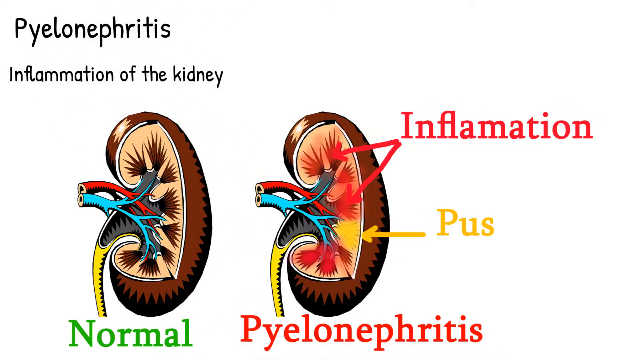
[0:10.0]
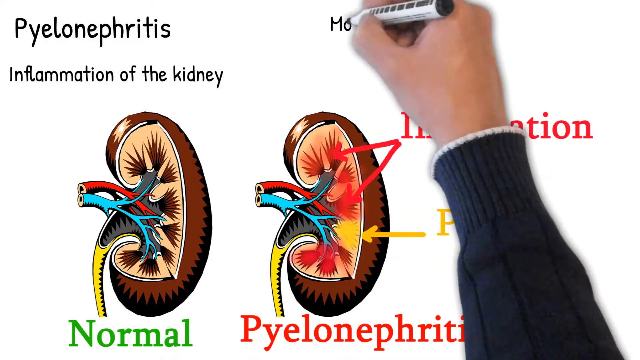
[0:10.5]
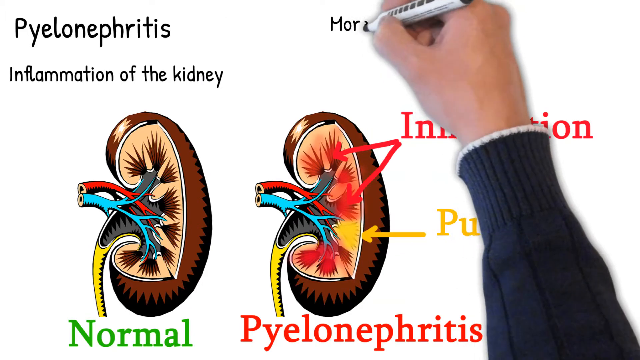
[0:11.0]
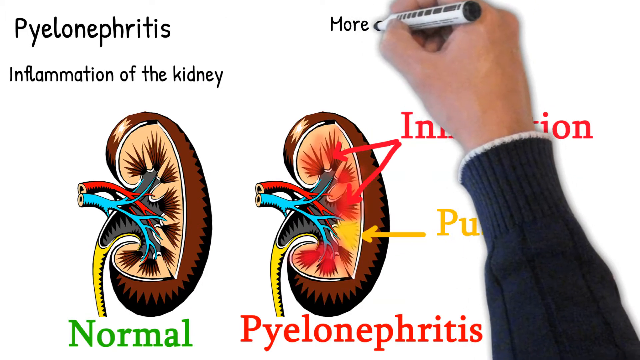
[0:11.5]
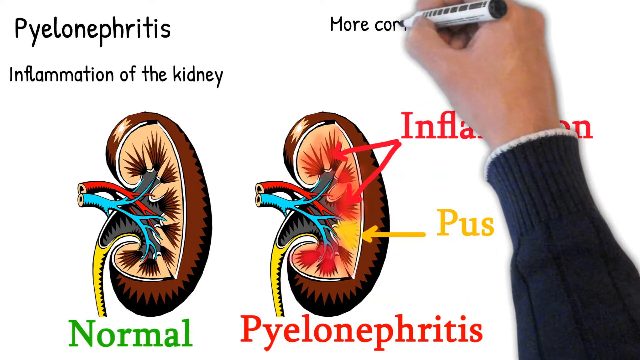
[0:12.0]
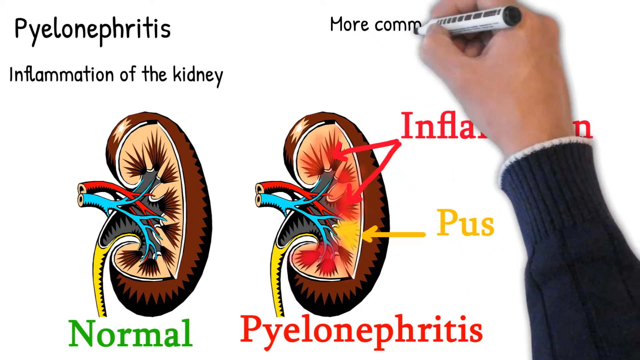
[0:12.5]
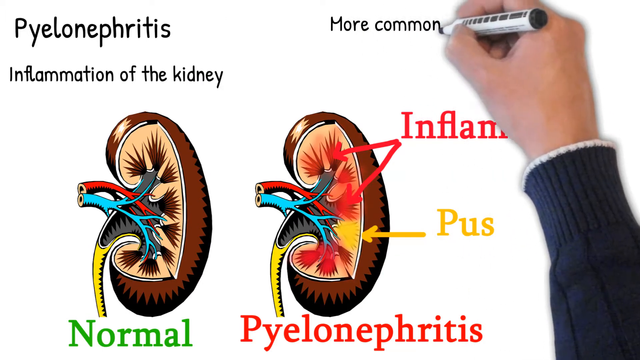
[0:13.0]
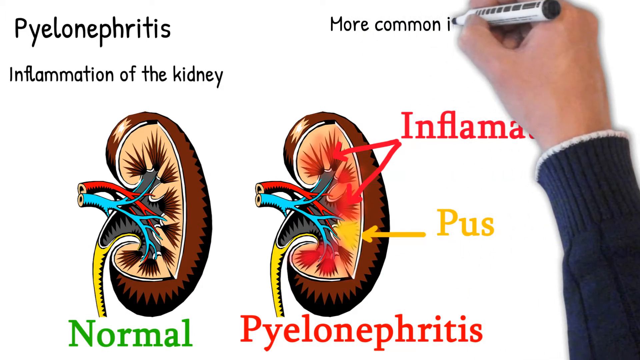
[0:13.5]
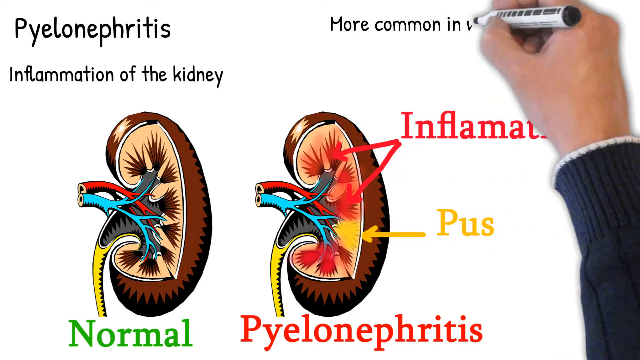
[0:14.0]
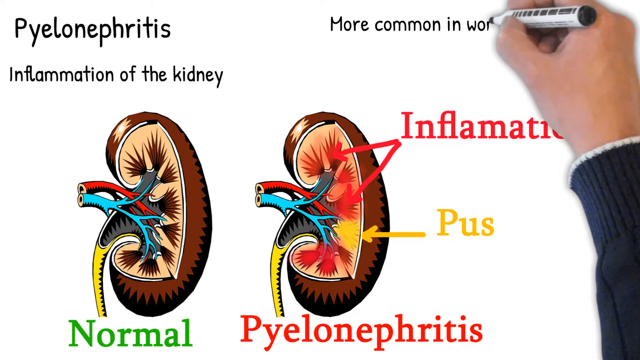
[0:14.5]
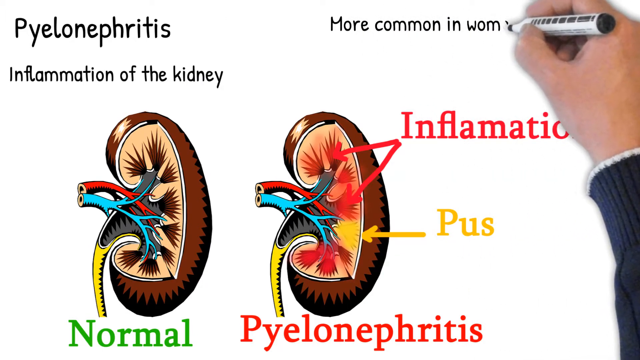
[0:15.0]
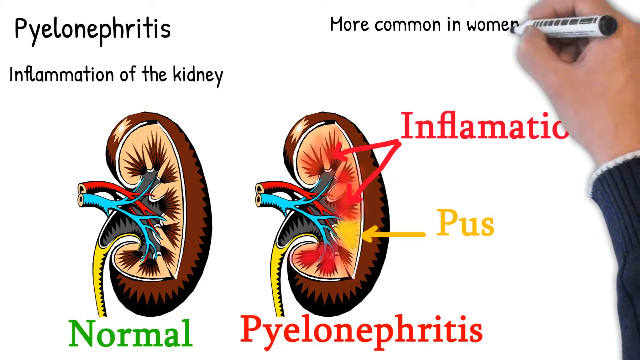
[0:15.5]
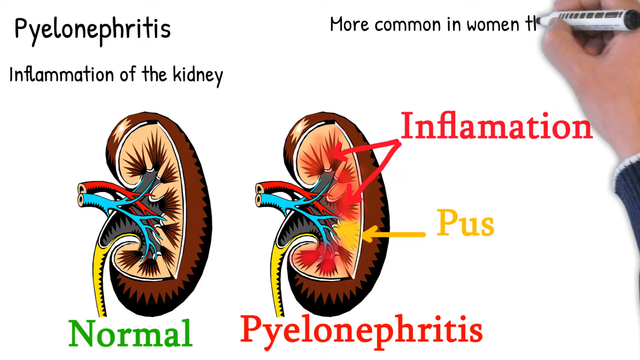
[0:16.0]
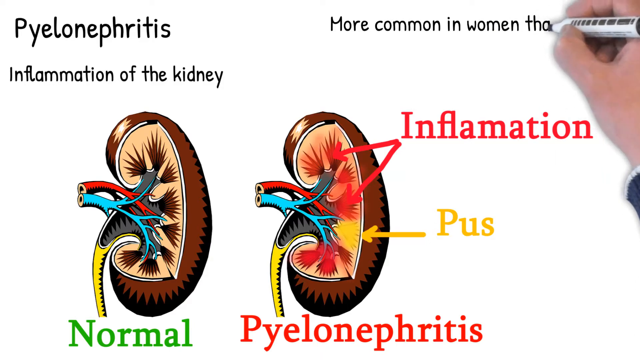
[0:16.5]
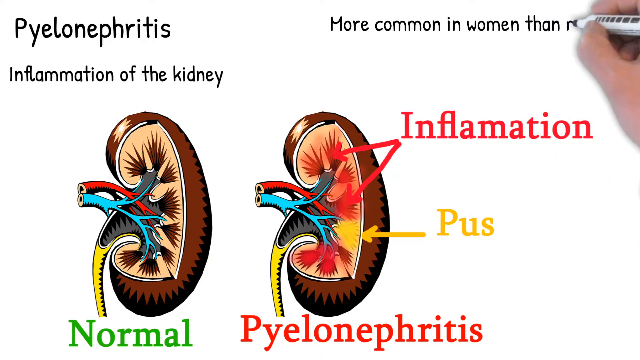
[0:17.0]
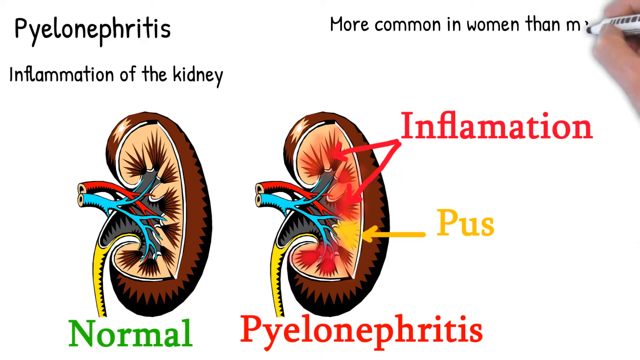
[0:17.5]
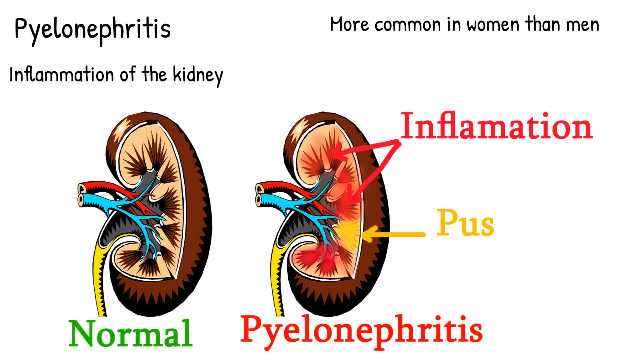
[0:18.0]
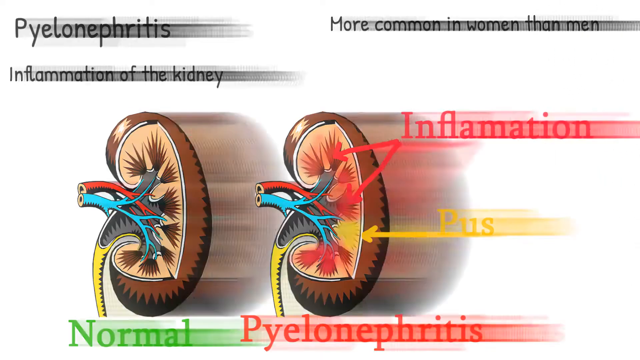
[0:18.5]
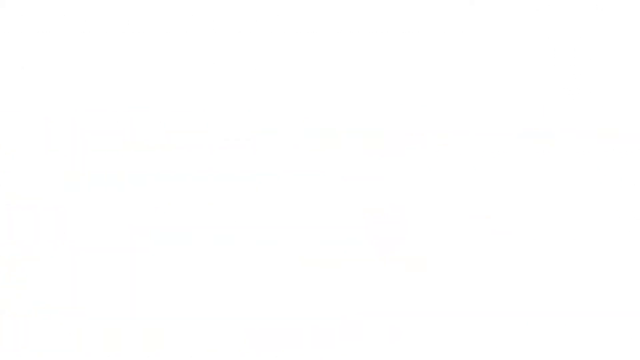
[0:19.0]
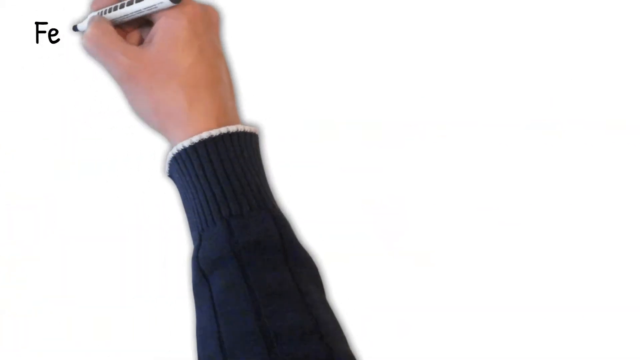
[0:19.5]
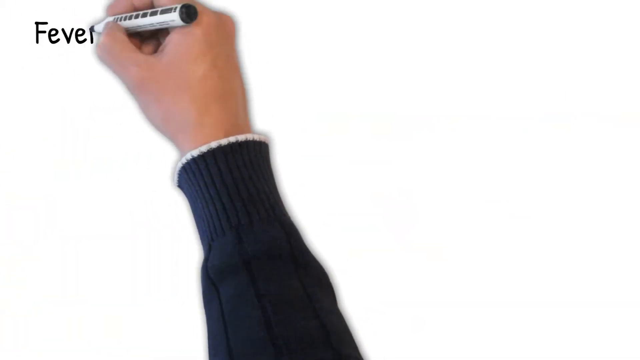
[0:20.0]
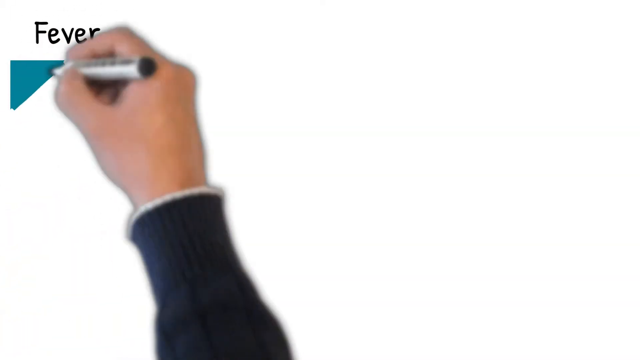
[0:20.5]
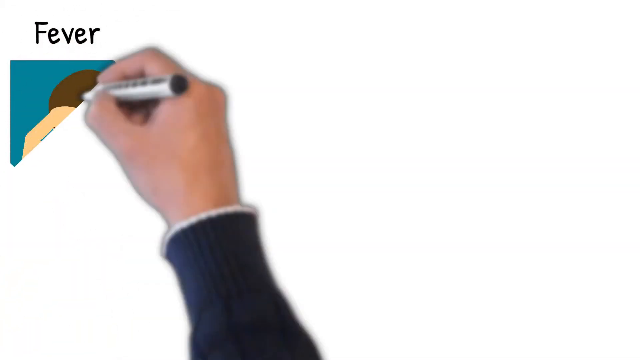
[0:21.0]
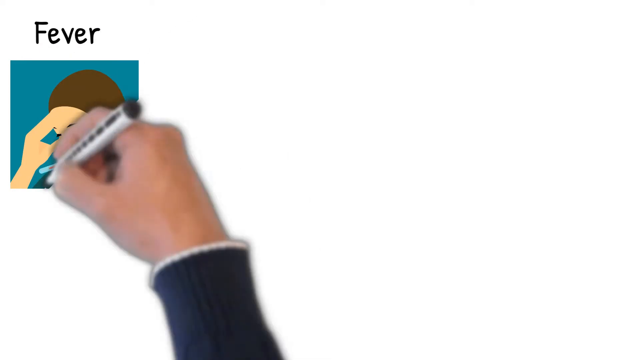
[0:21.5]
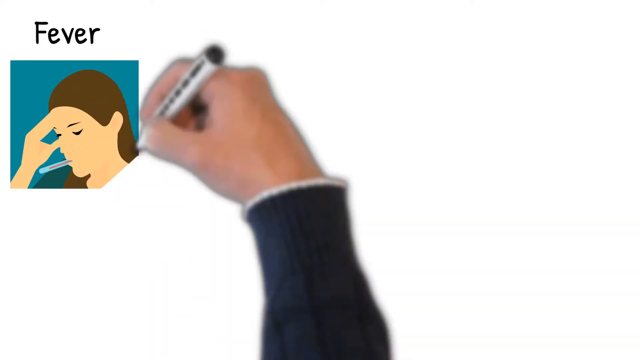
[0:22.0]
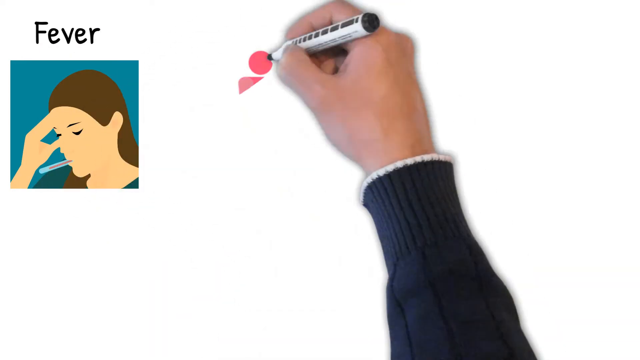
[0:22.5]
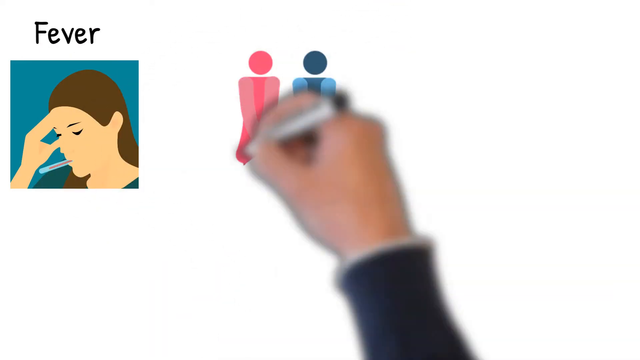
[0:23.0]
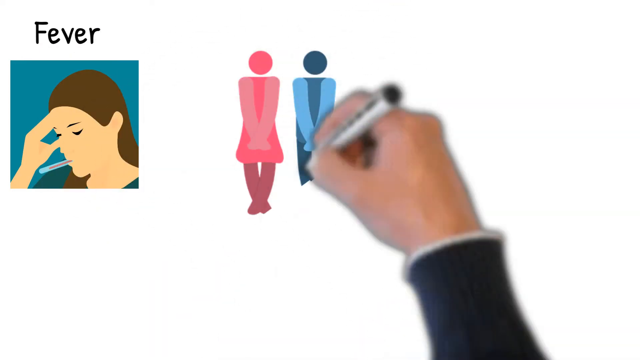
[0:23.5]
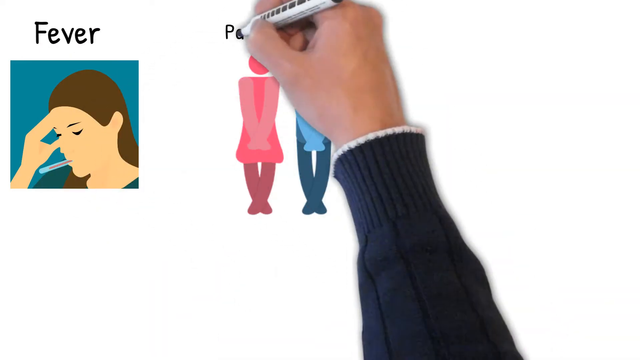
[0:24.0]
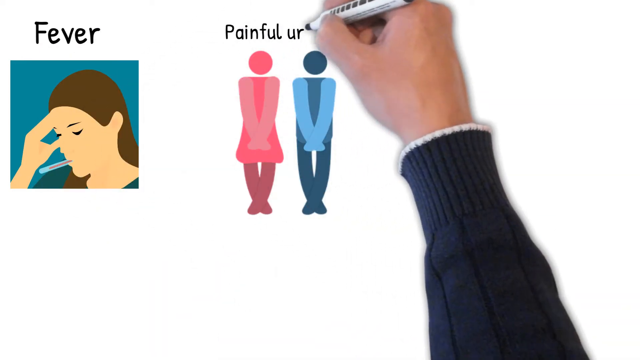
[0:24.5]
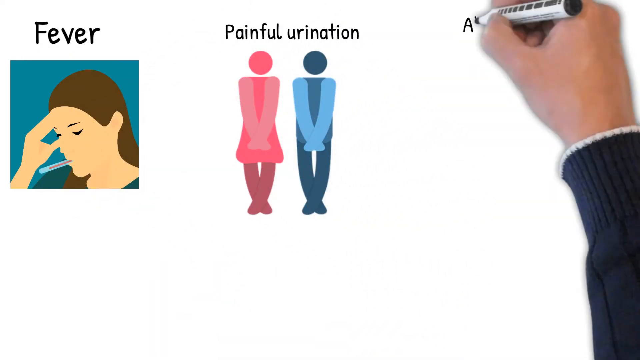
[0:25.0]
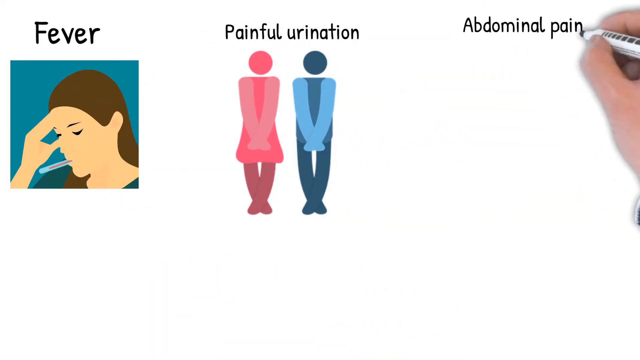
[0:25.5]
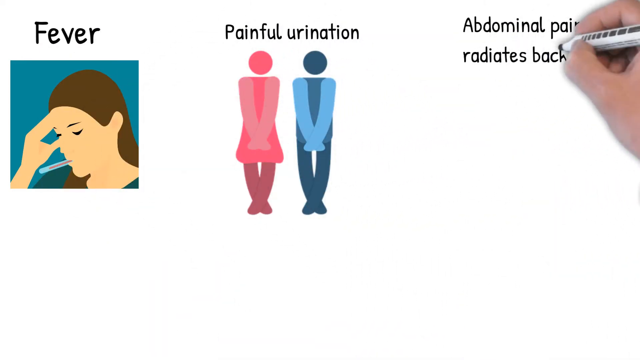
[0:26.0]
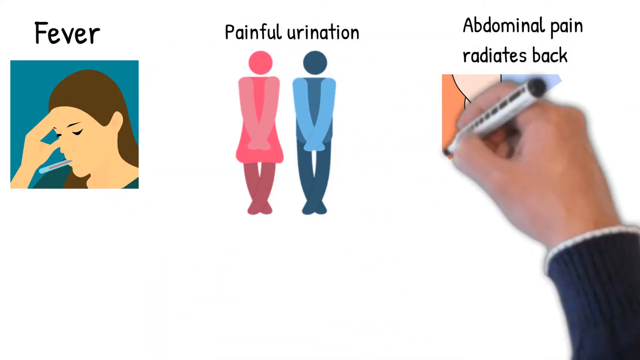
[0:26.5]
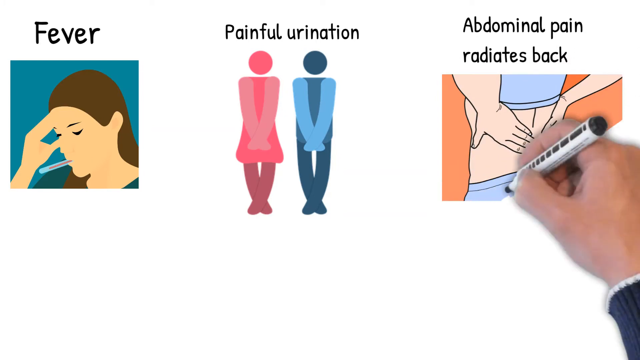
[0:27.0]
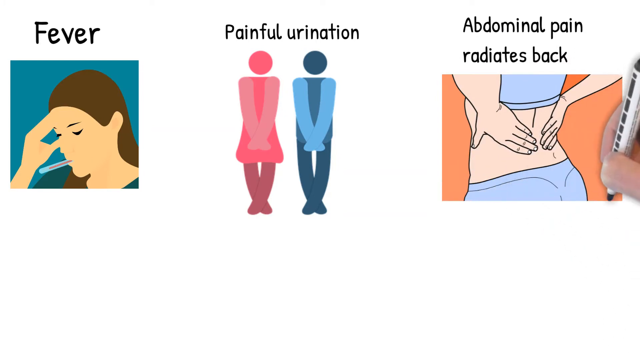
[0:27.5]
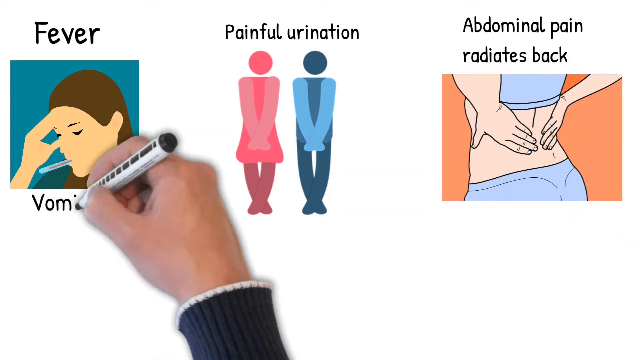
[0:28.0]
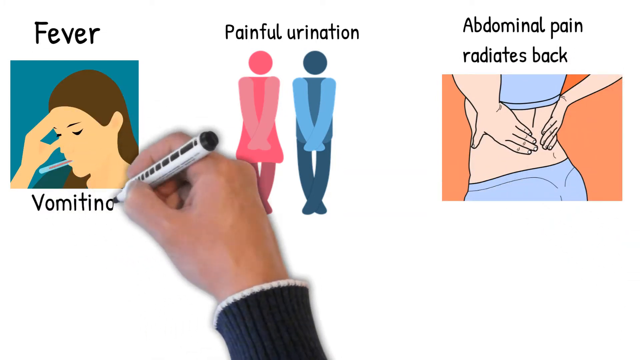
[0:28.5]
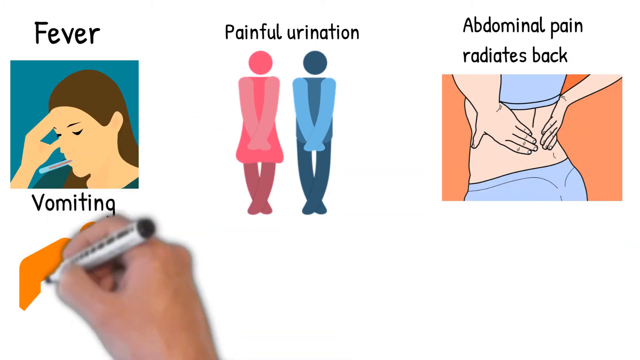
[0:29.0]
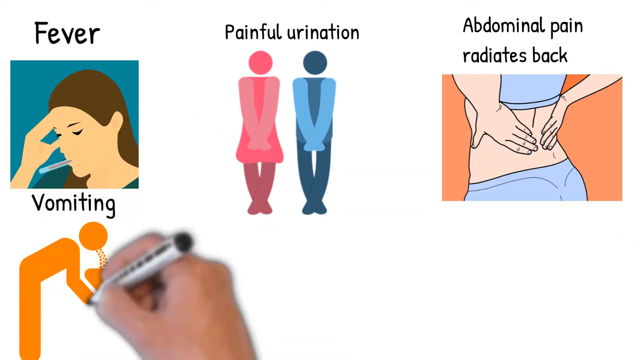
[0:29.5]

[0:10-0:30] The man wears a black sleeve and writes on the whiteboard with a white marker that has black writing on it. The board shows two kidneys, one normal and one with pyelonephritis, inflammation of the kidney; the one with pyelonephritis is on the right, with inflammation shown in red and pus in yellow. He continues writing "more common in women than men". He then shows the symptoms. For "fever" there is a picture of a woman with brown hair holding her right hand on her forehead. For painful urination there is a man and a woman, and there is a picture of a back where the kidneys hurt. The symptoms are "fever", "painful urination", "abdominal pain radiates back", and "vomiting", written in black letters with drawings under each one.